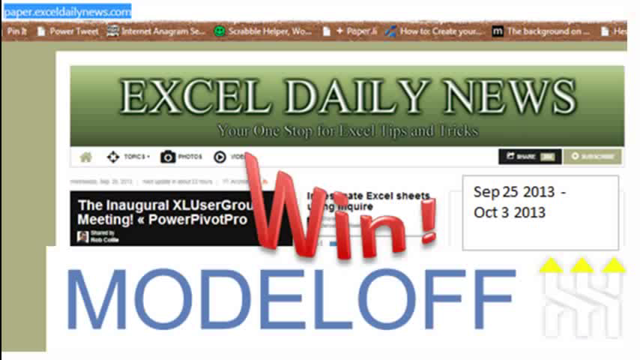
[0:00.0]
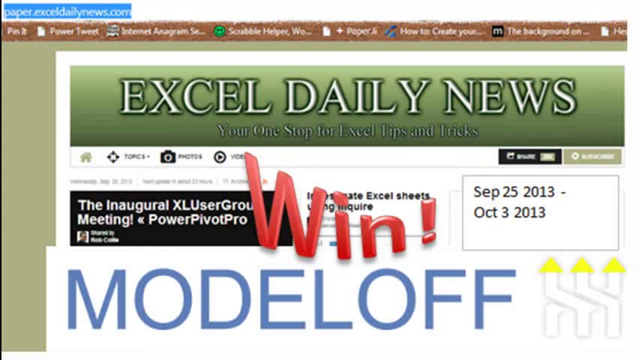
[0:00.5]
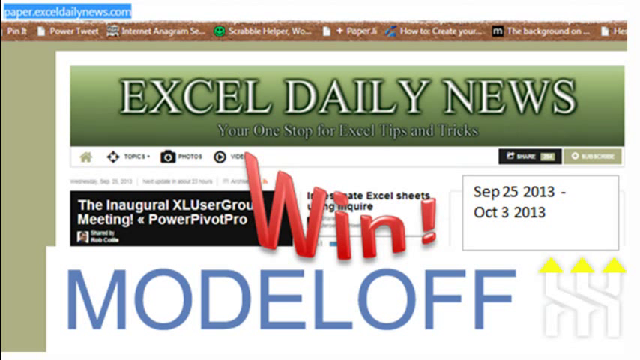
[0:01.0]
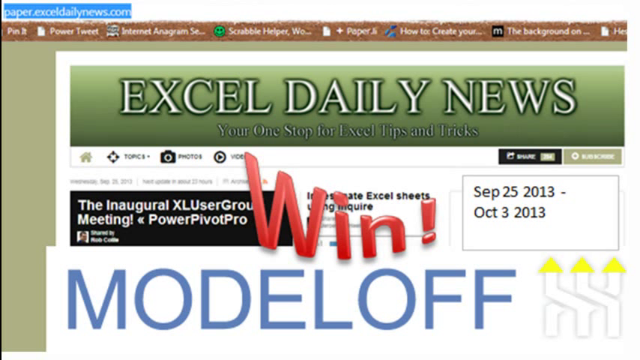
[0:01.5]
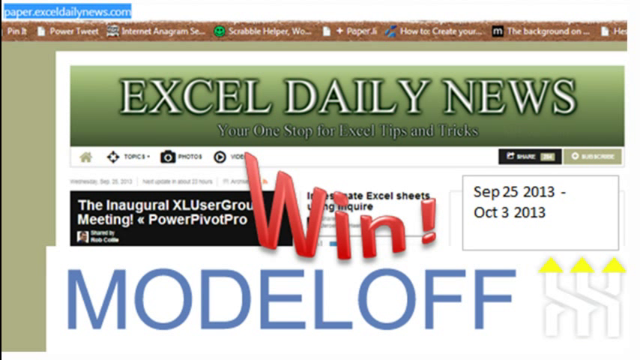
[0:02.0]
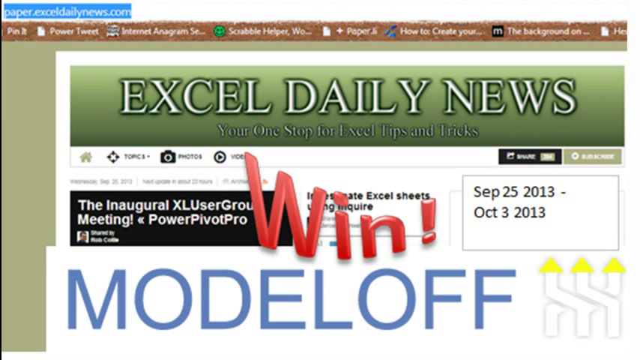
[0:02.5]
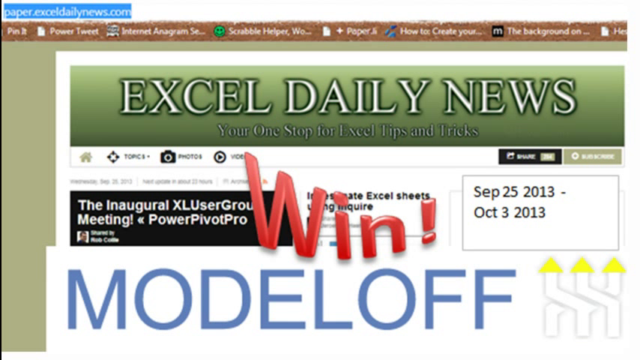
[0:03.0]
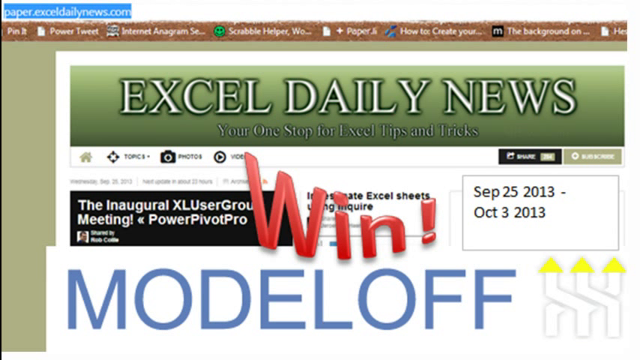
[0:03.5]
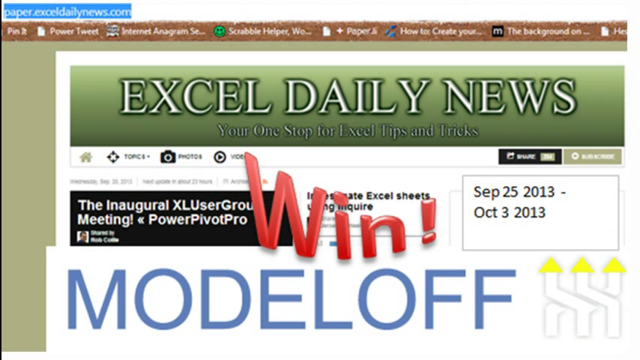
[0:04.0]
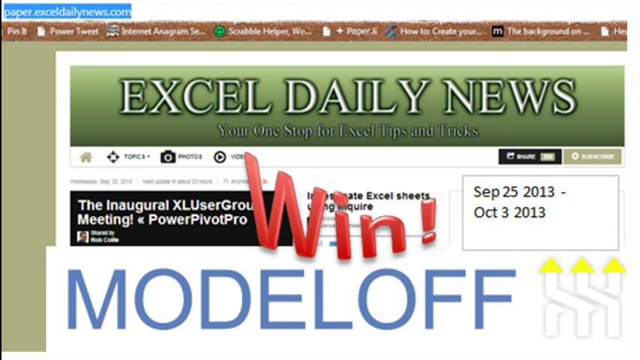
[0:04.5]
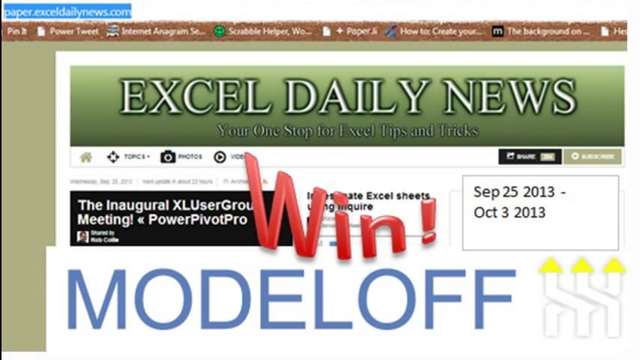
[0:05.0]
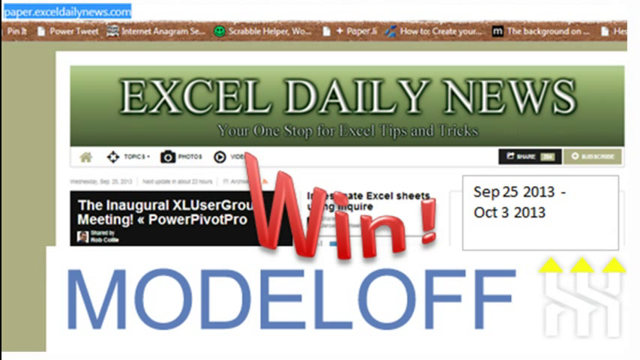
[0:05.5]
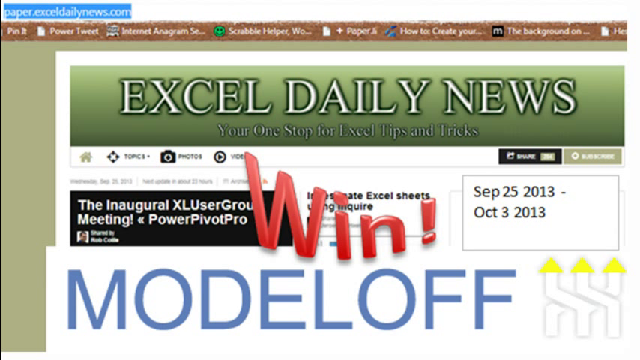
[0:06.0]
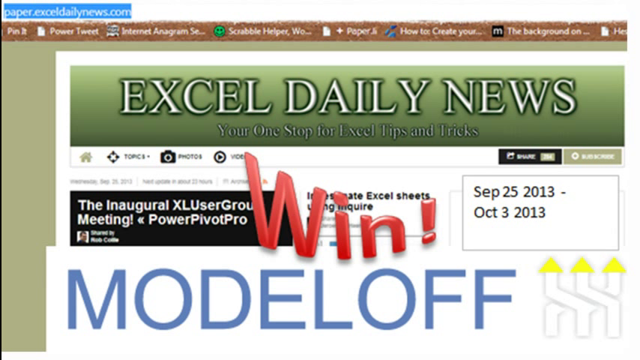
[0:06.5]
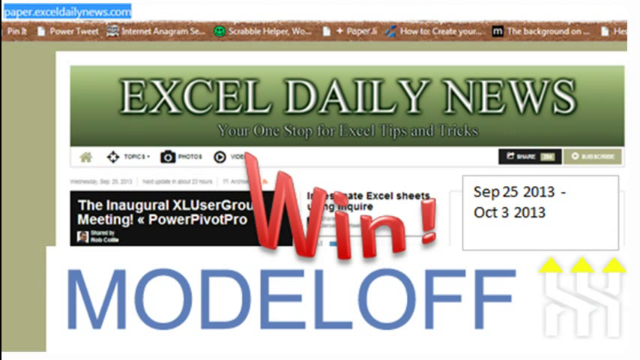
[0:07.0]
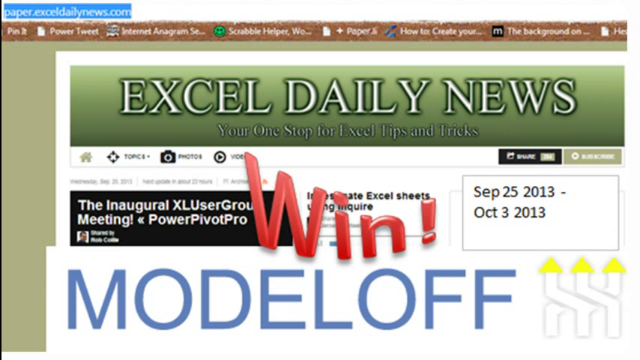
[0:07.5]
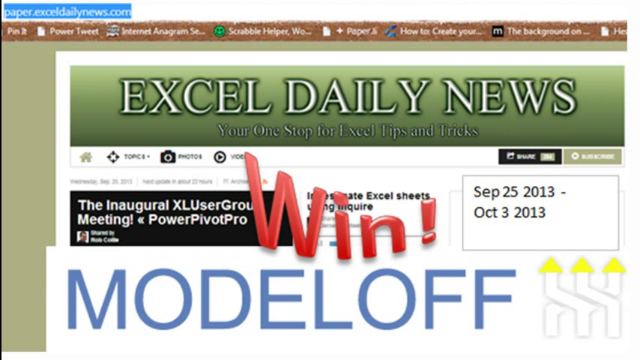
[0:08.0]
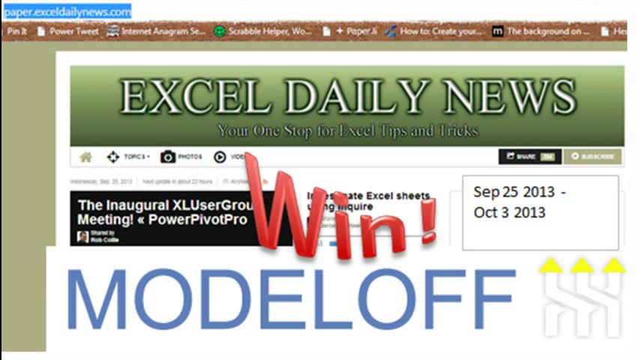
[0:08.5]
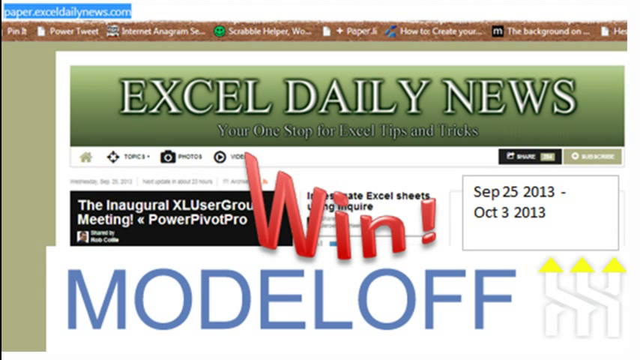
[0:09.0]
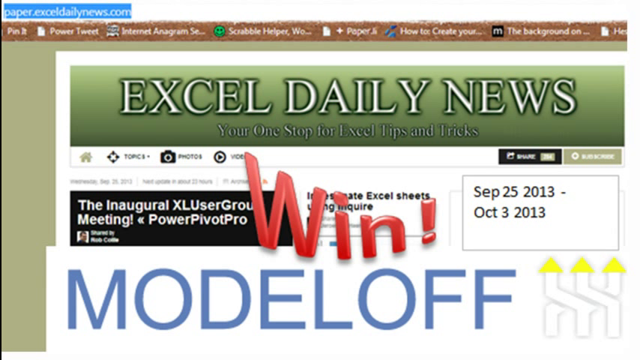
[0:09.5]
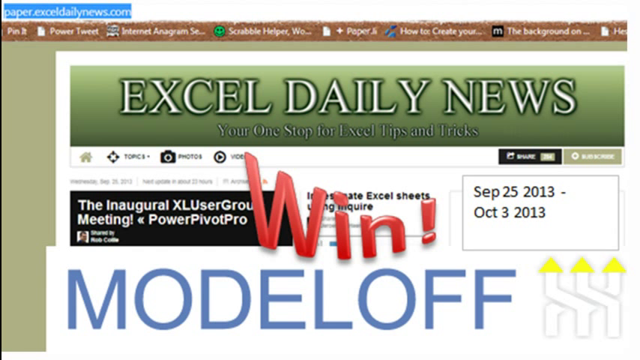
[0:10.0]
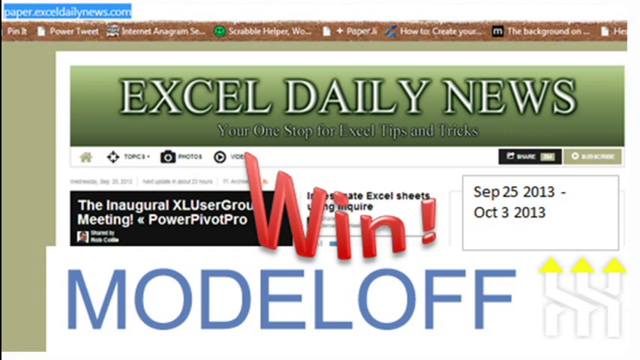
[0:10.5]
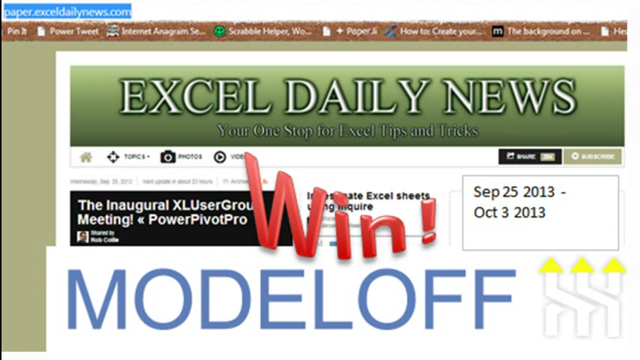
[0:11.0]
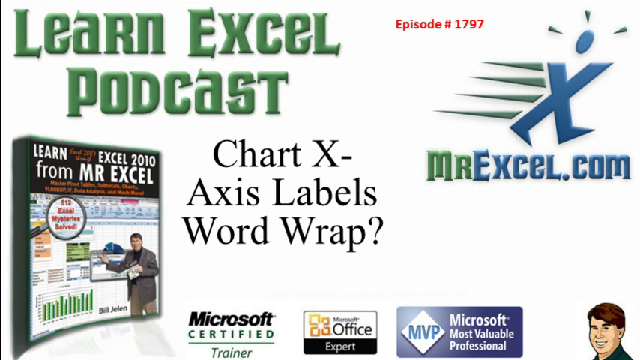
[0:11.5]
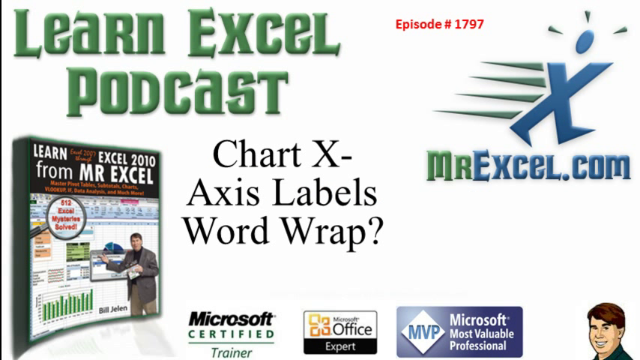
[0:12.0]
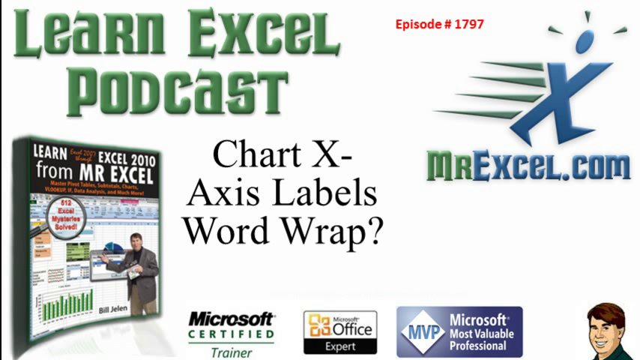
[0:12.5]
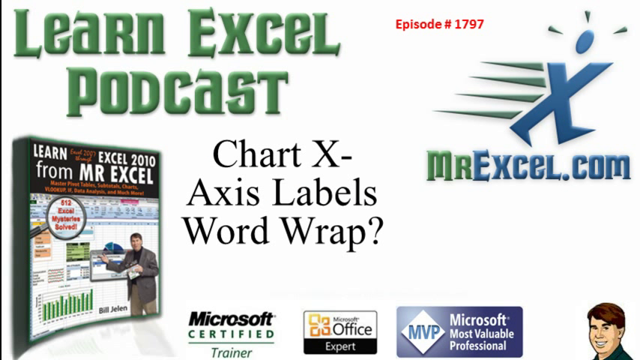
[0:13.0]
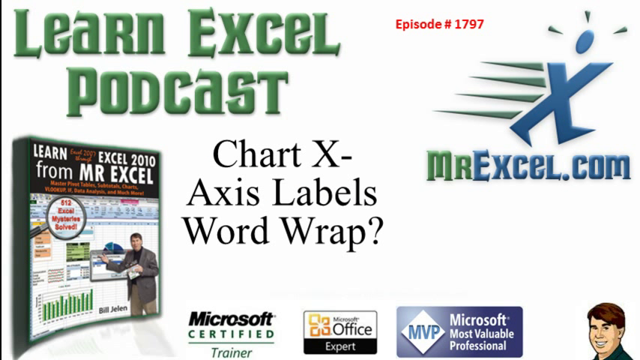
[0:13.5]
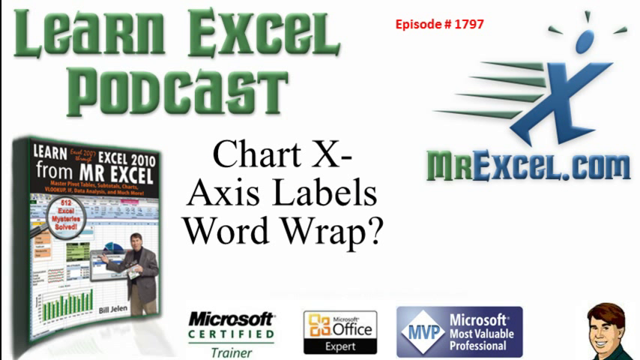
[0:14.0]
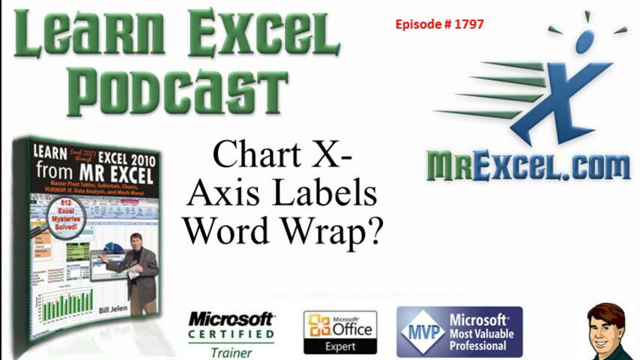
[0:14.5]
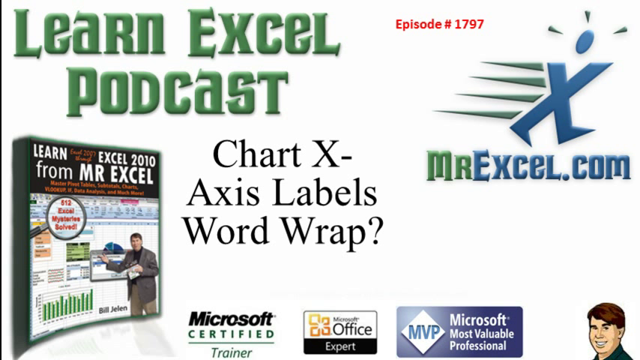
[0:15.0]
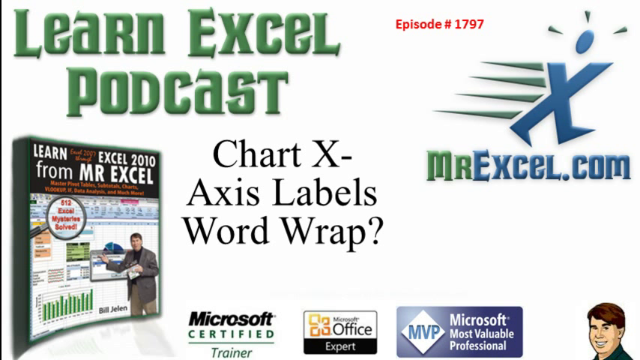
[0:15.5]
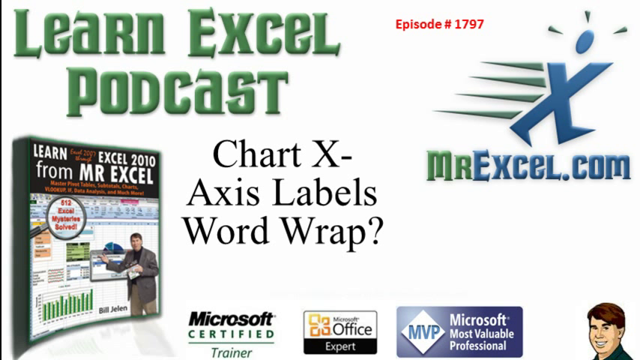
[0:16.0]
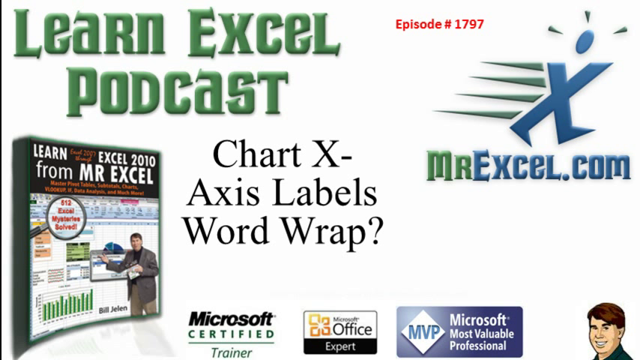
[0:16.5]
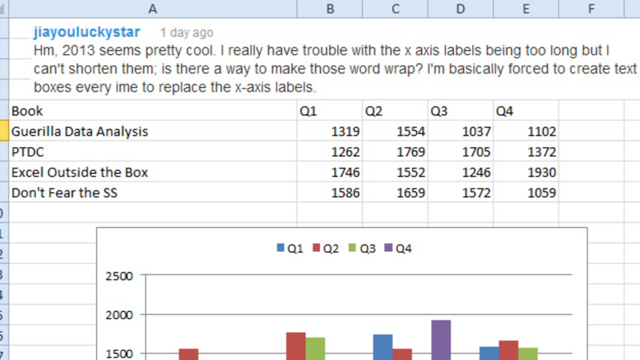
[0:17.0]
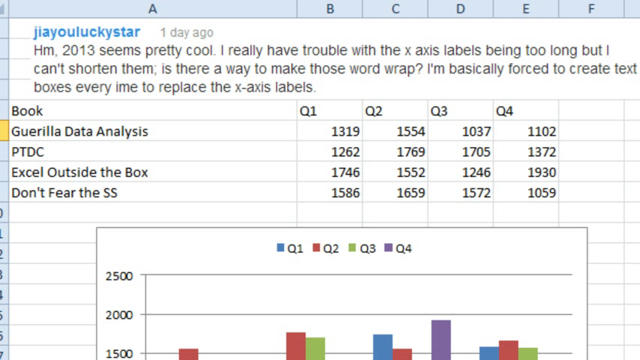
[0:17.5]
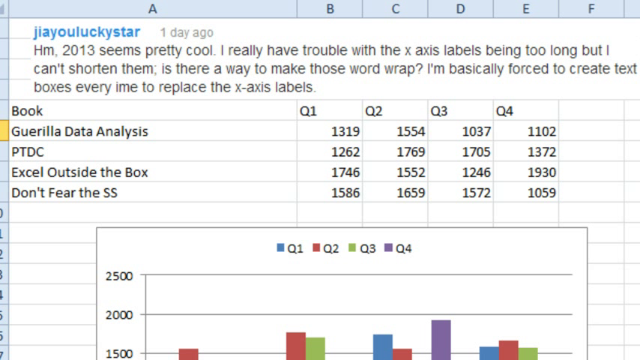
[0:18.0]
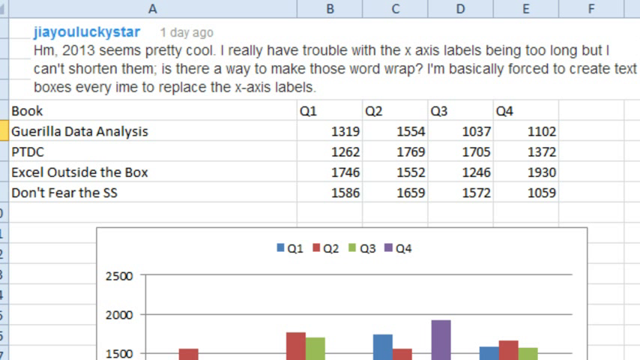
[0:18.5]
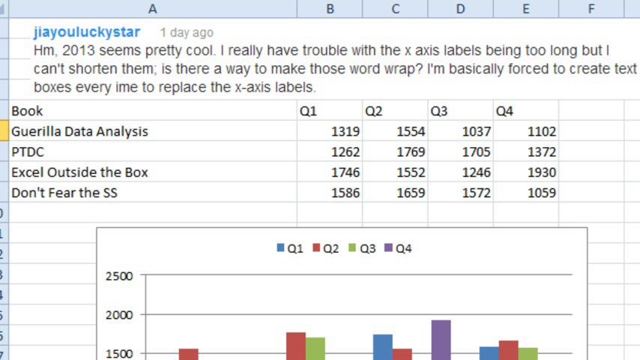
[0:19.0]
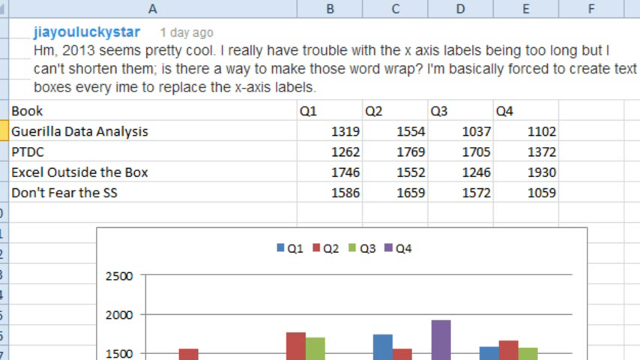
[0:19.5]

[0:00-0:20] Someone records their computer desktop screen. The page has a green pea-colored background with multiple lines of various texts all over it. At the very top left it reads "paper.exceldailynews.com", and a banner at the top reads "Excel Daily News, your one-stop for Excel tips and tricks." There is clipart of the word "win" in the center, along with various images and Photoshop-like text all over the page. The video then cuts to a slide with a white background and multiple lines of text reading "Learn Excel Podcast Episode Number 1797, Chart X-Axis Labels Word Wrap, MrExcel.com." Multiple seals appear at the bottom: "Microsoft Certified", "Microsoft Office Expert" and "Microsoft Most Valuable Professional". The screen then cuts to a zoom in on Microsoft Excel, where a comment is pasted on the screen that reads "G-A-U, lucky star, one day ago. 2013 seems pretty cool. I really have trouble with the x-axis labels being too long, but I can't shorten them. Is there a way to make those word wrap? I basically forced to create text boxes every time to replace the x labels."